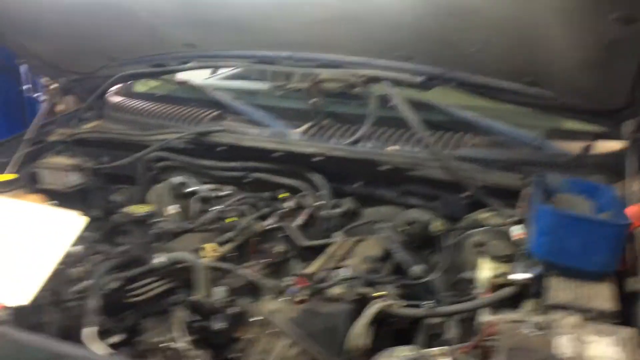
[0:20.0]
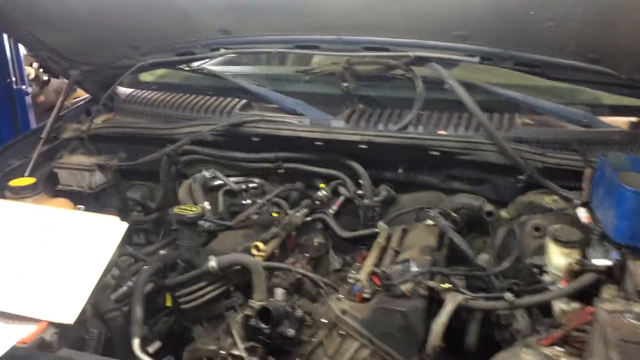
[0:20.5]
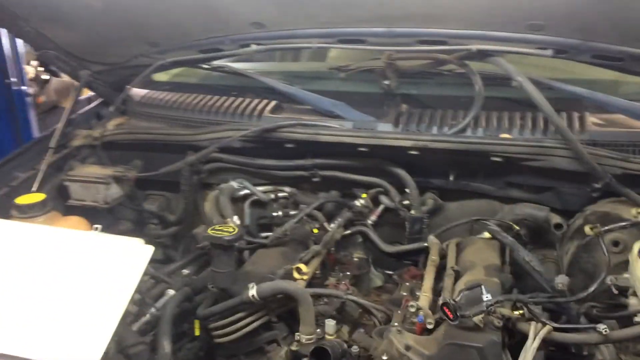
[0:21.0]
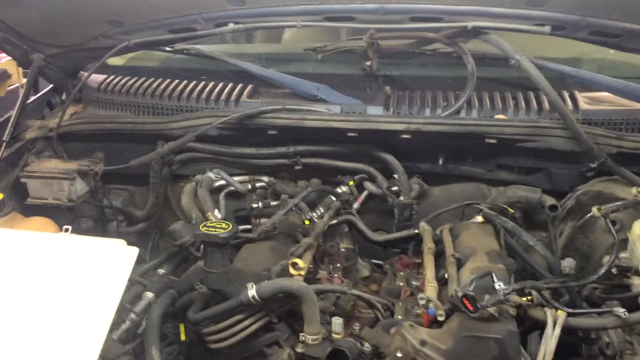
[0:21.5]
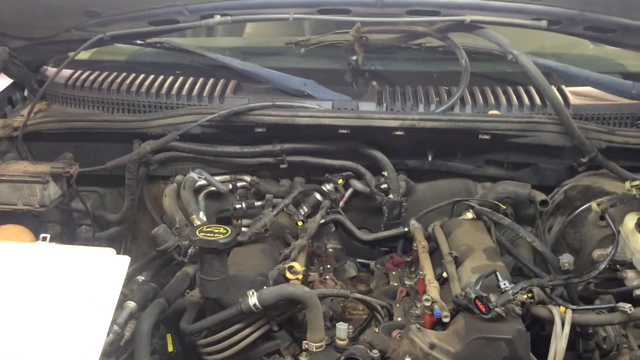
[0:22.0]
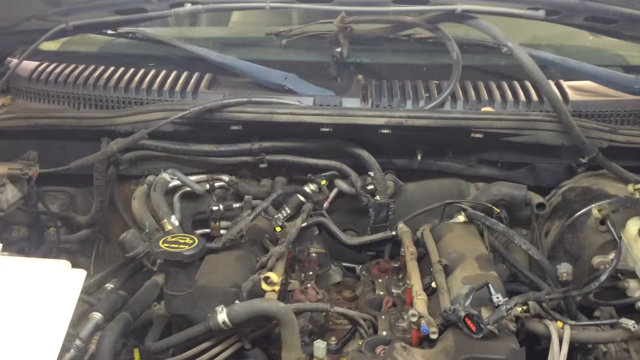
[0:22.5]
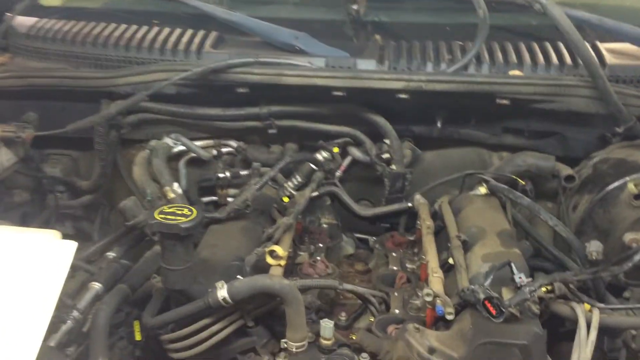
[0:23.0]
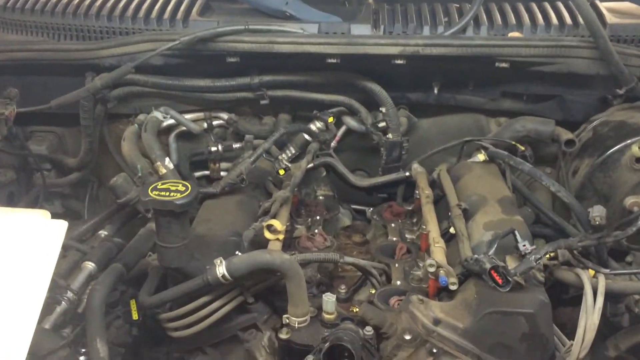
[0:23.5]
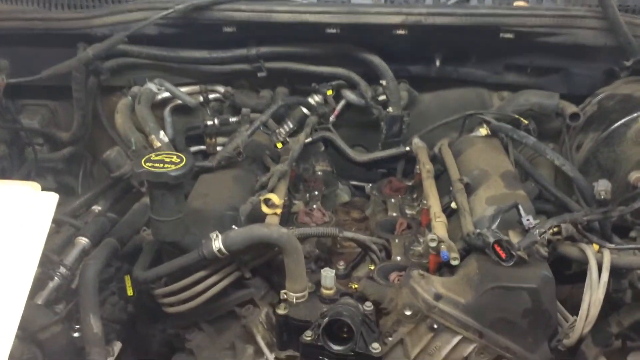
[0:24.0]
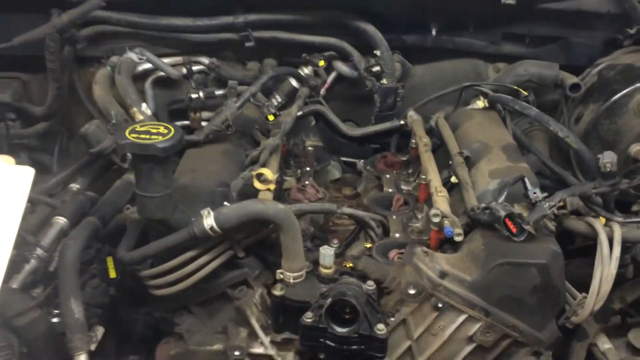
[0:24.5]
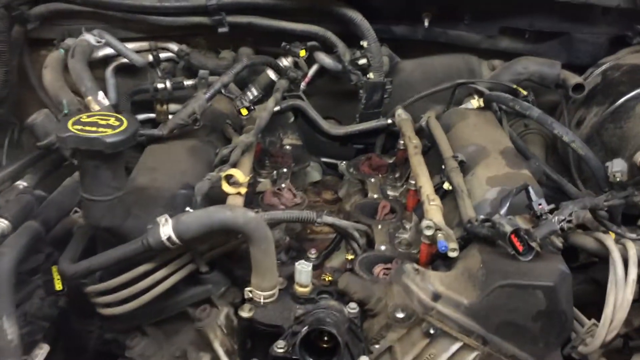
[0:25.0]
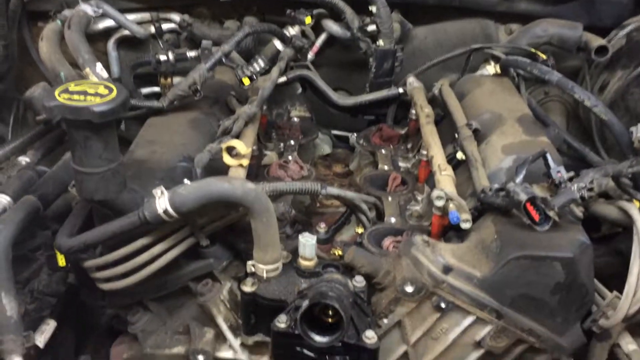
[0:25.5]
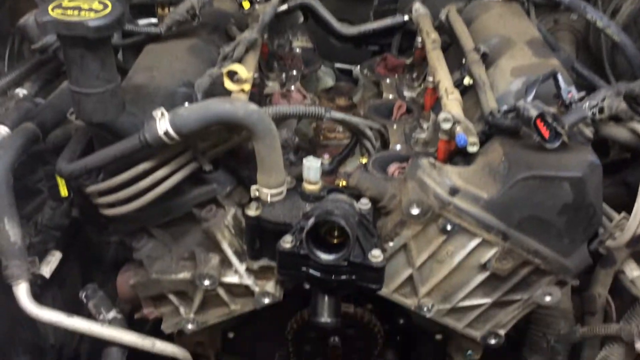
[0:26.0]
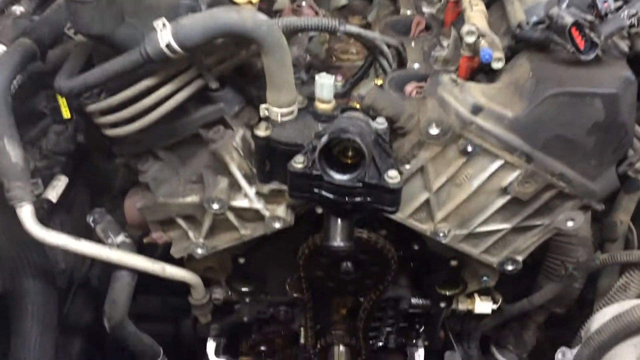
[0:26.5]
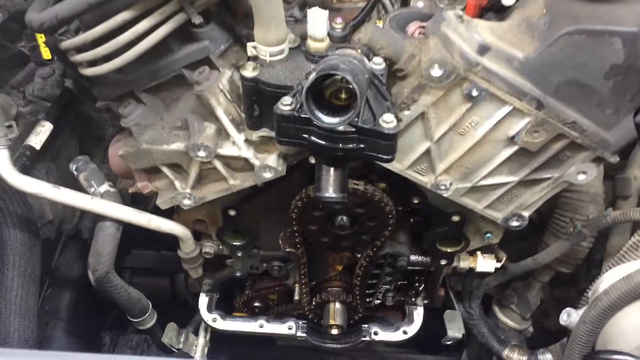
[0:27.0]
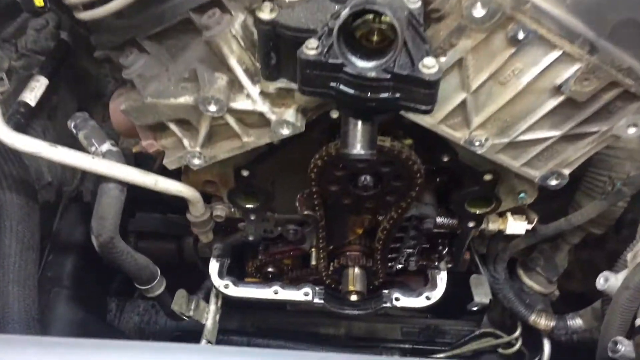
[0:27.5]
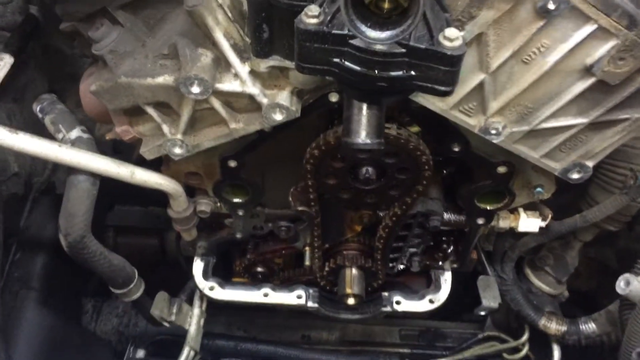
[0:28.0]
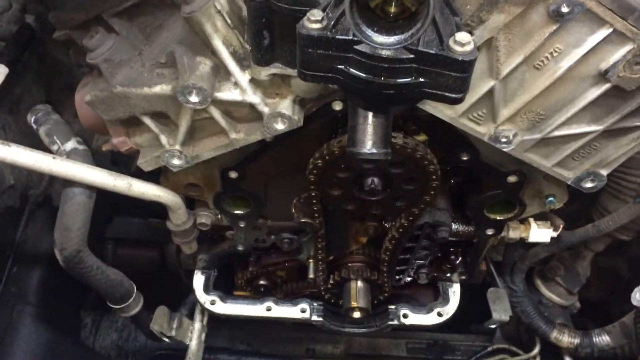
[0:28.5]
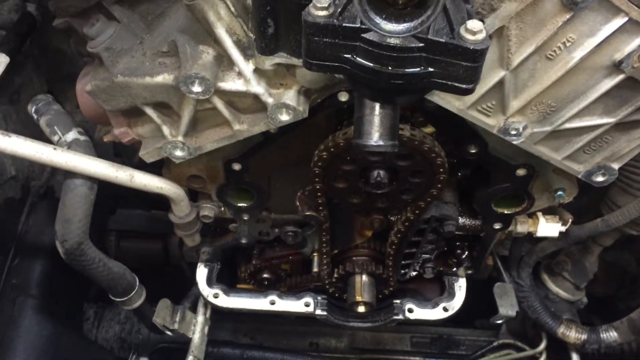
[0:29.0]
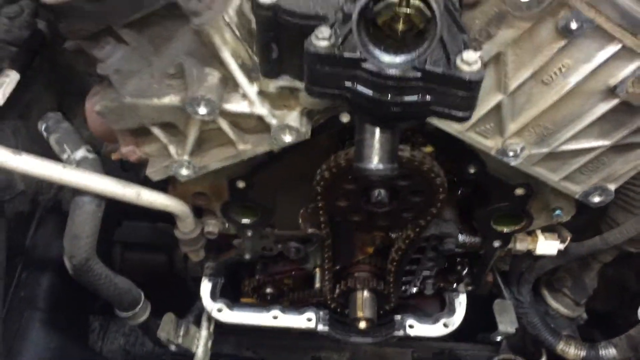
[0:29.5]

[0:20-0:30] A zoomed-in view of the open hood shows the wires running through the car, all black or dark gray and quite dusty. The camera focuses and zooms in on a black piece of metal with screws attached to it and a lever at the bottom. The lever is metal and dark in color, and some tubes run along the side, attached to what the lever is attached to. Near the end, a fair-colored hand reaches down to where the lever is.